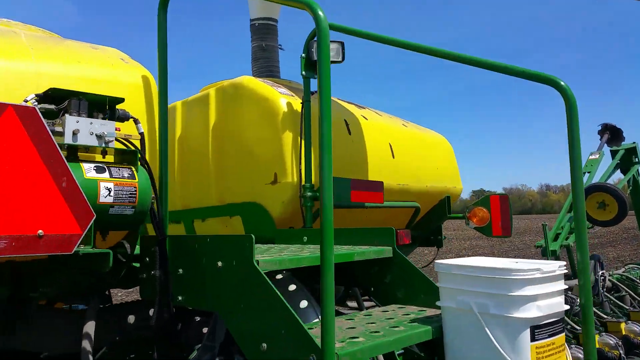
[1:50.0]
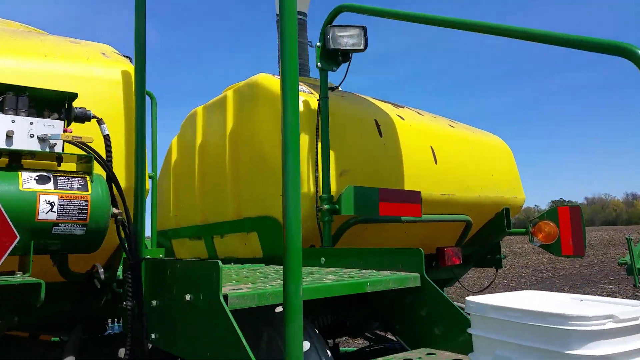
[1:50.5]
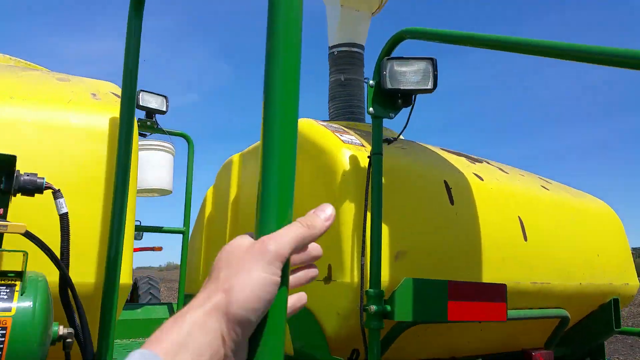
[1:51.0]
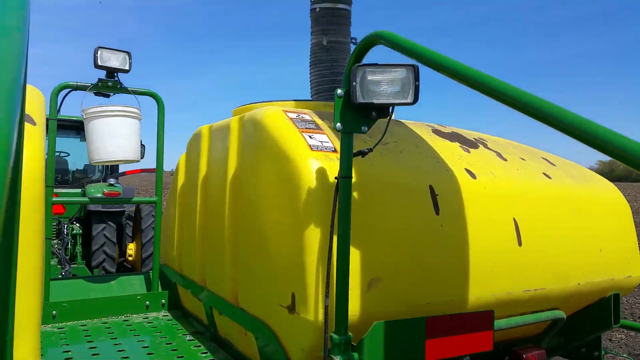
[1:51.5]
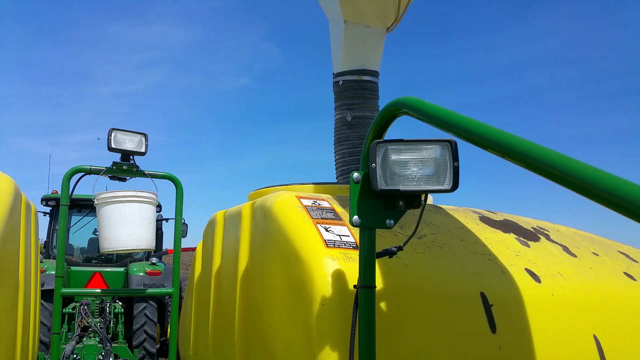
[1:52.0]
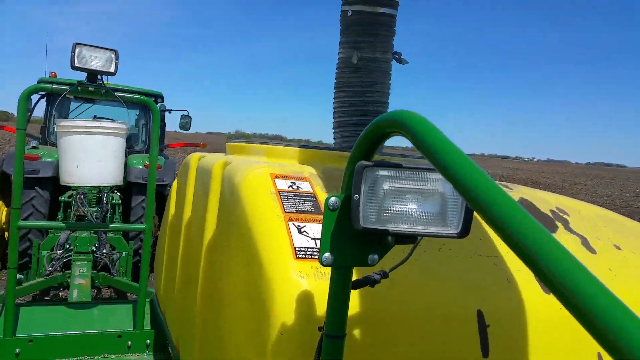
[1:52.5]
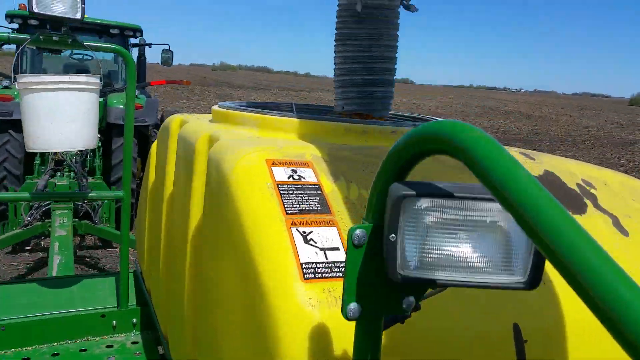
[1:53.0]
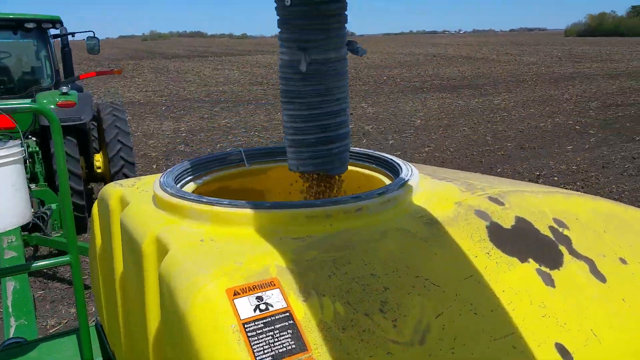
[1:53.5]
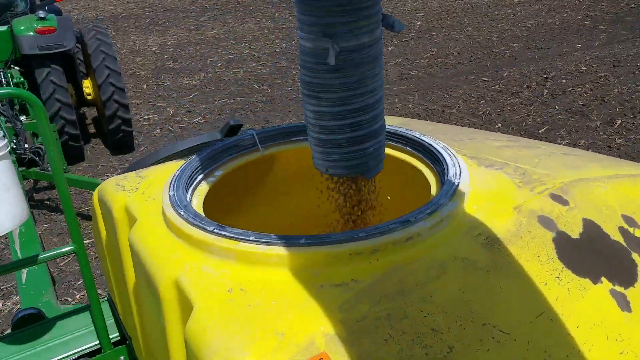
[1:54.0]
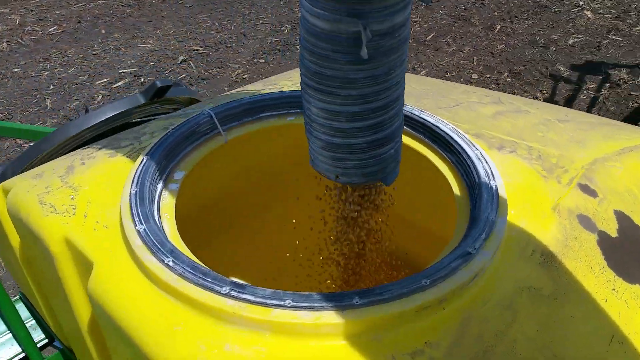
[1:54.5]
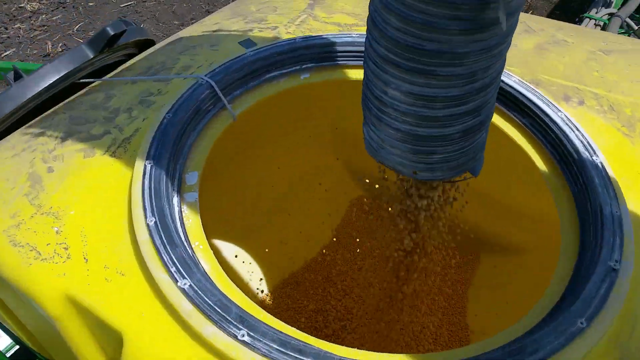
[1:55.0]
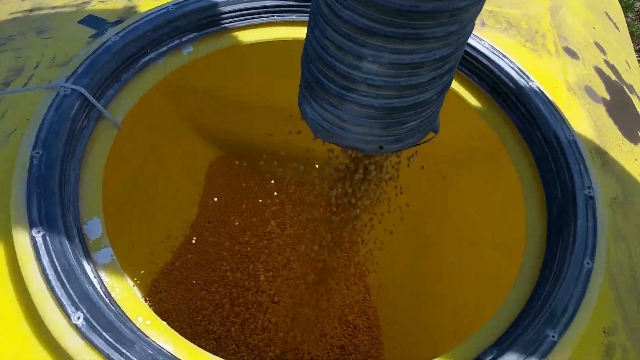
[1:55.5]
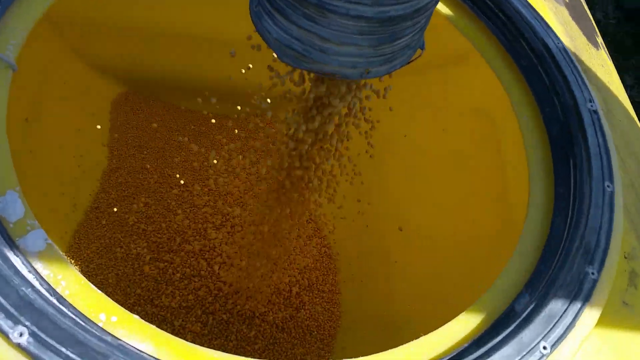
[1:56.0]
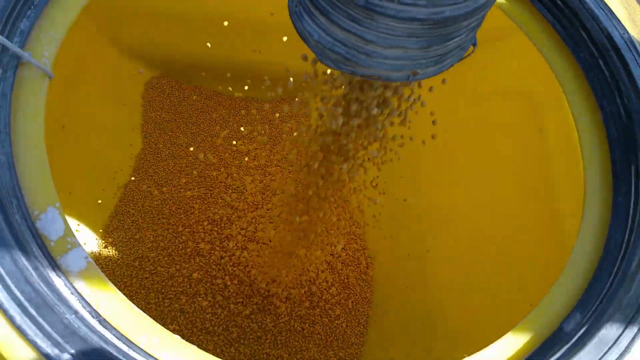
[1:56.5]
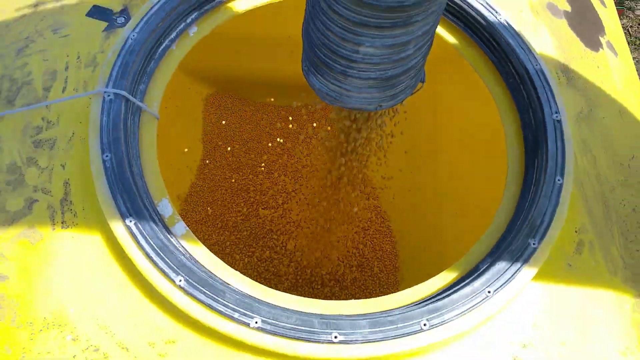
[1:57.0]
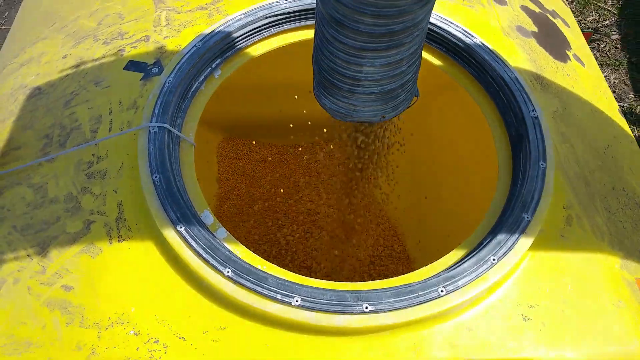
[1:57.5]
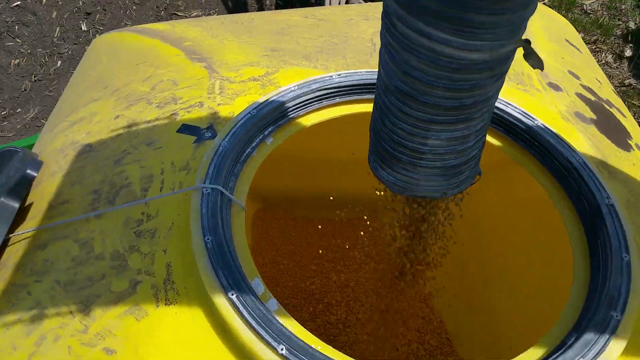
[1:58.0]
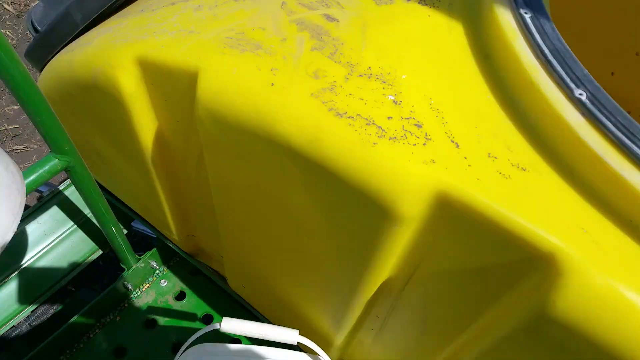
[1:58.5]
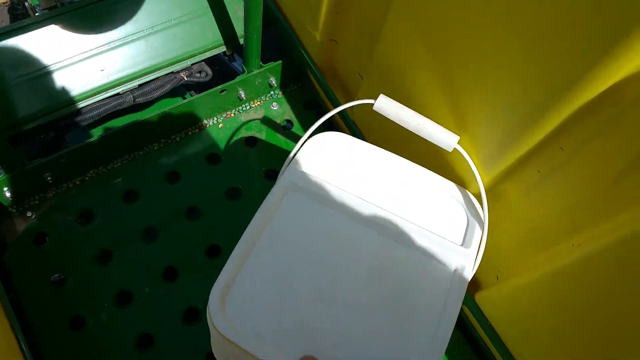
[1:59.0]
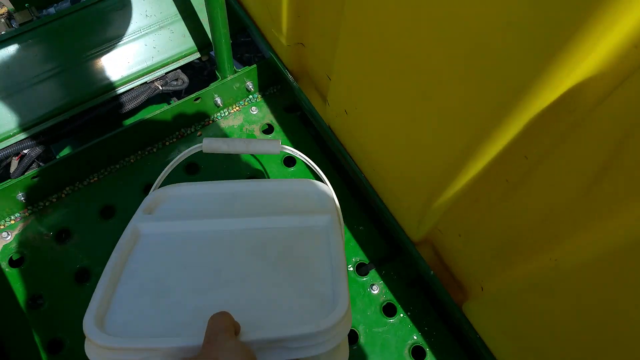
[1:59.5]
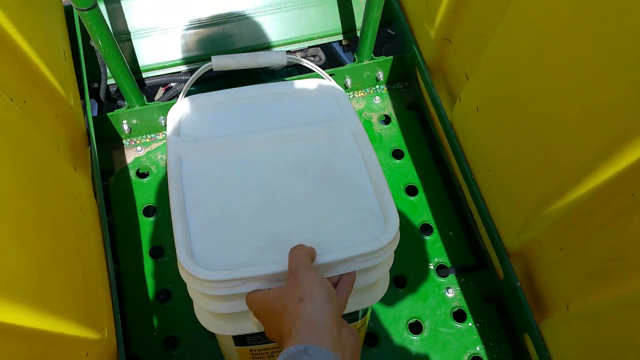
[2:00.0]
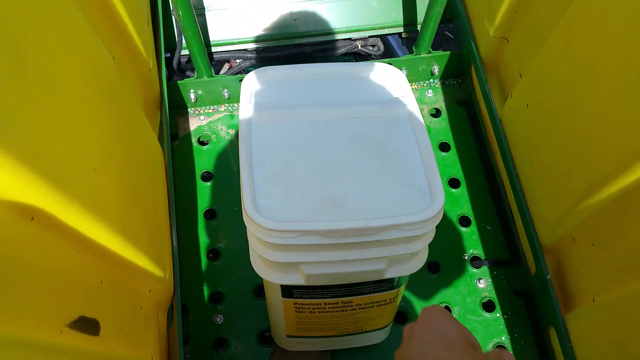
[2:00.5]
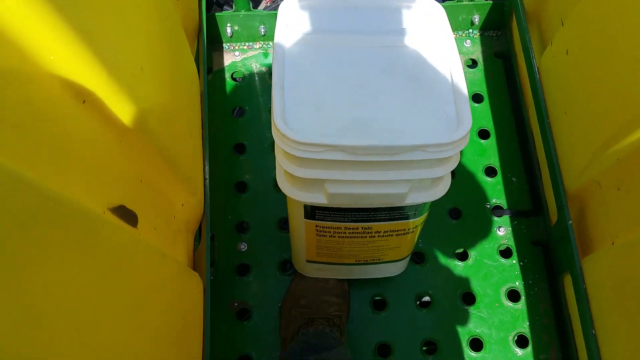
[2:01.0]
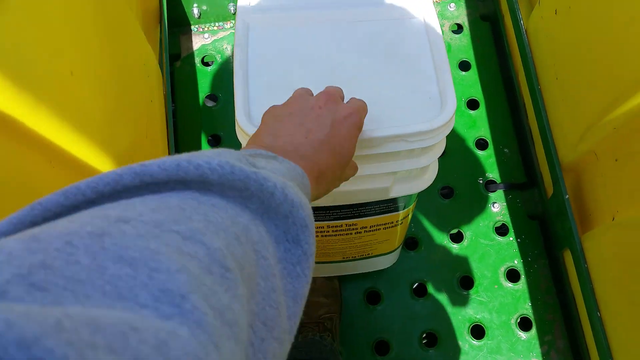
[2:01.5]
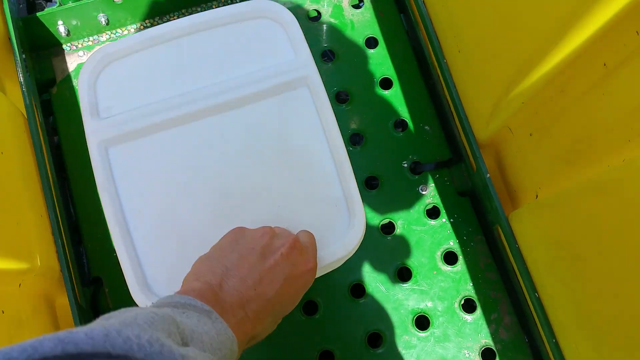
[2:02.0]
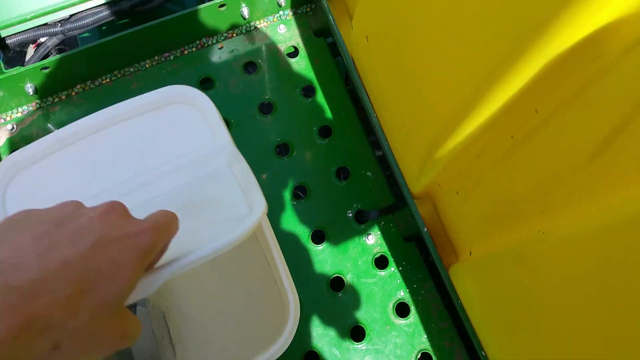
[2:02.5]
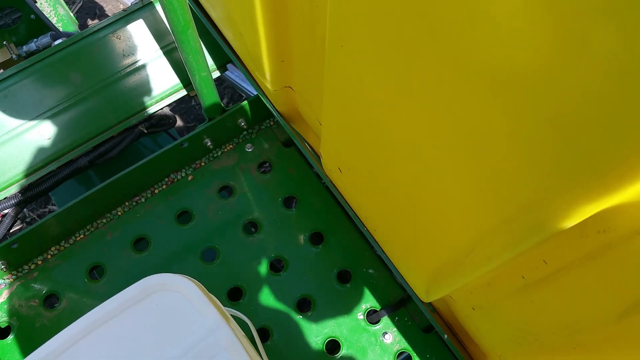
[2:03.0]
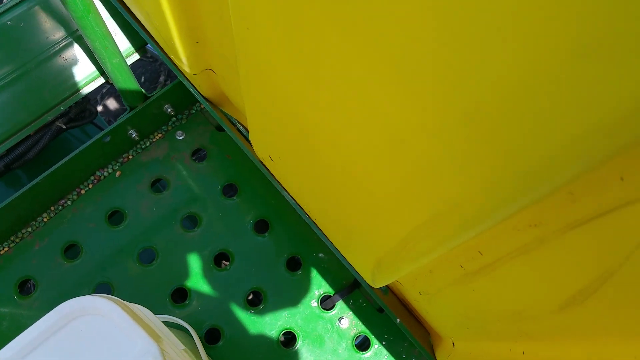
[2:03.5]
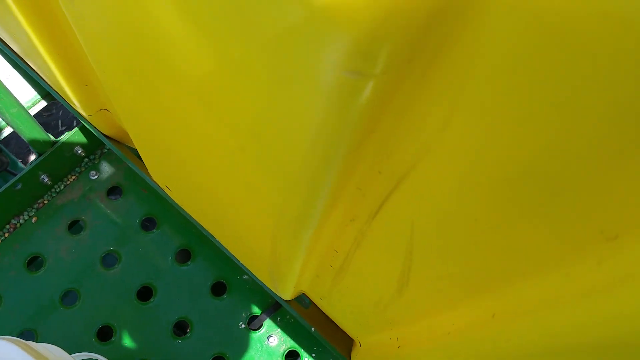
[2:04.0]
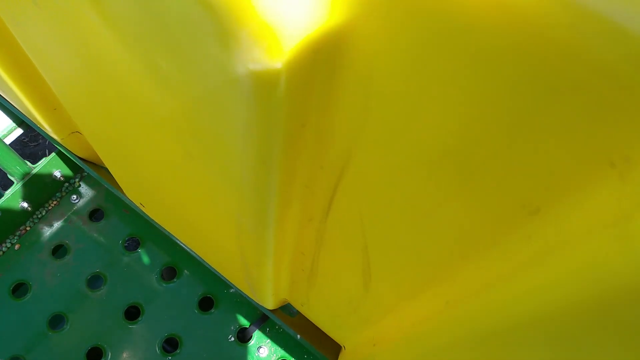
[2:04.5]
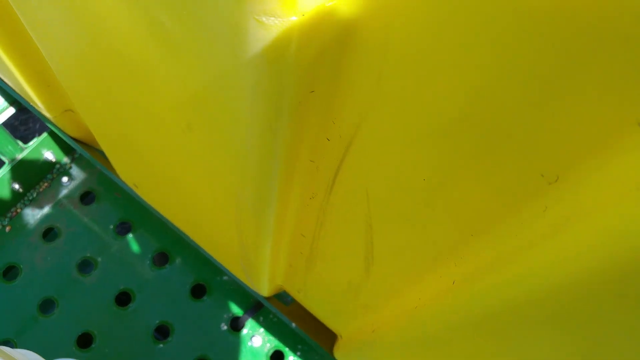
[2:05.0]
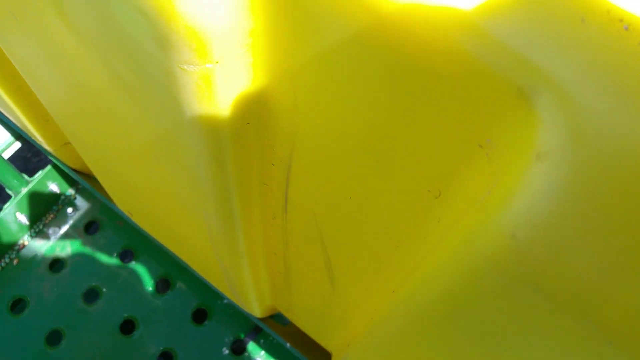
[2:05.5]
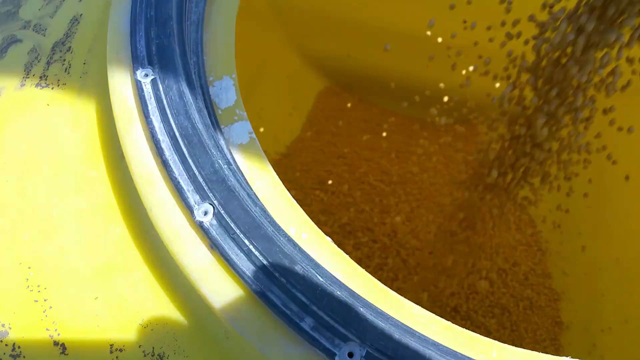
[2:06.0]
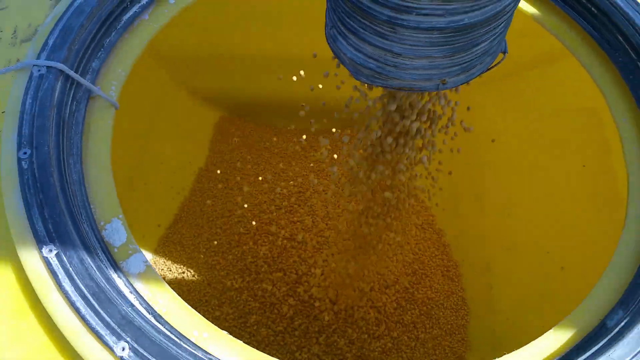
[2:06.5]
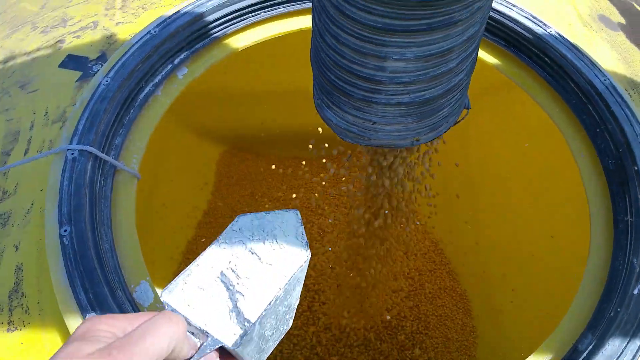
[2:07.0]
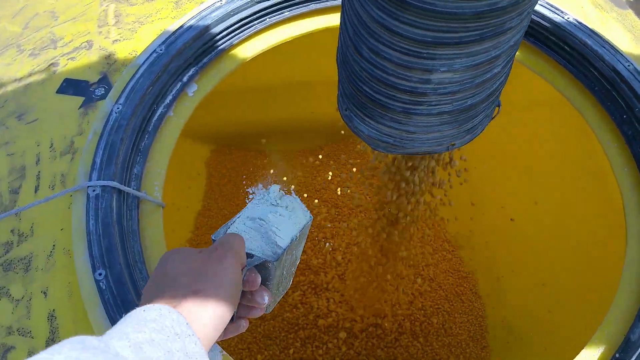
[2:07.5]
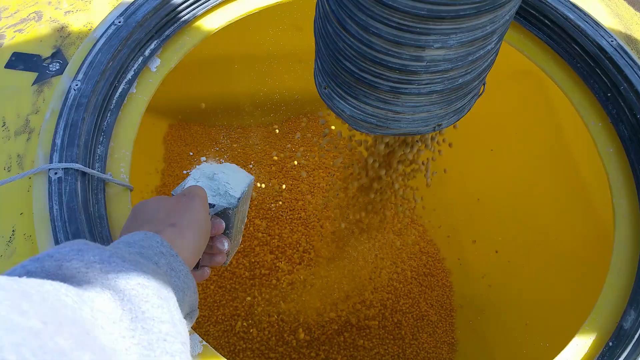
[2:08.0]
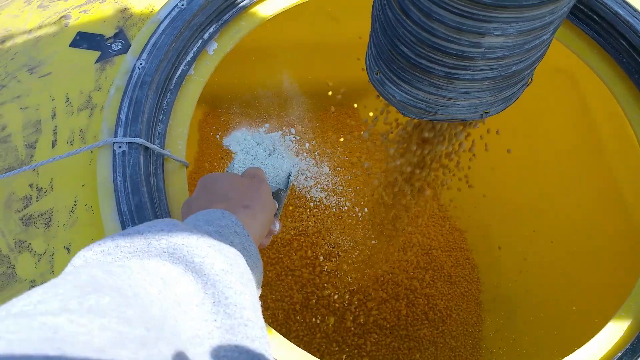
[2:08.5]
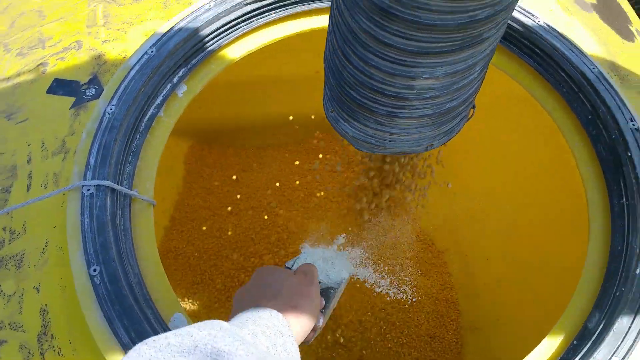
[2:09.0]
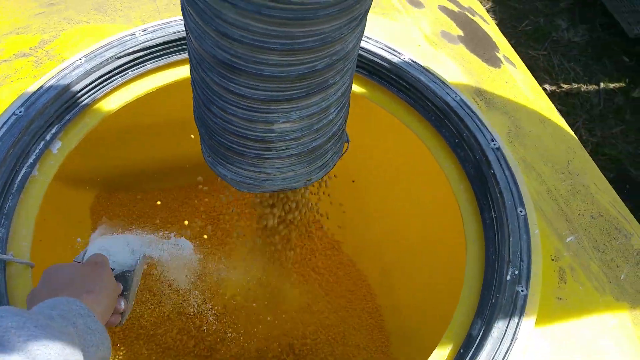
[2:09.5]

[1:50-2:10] The man behind the camera approaches the agricultural machine and climbs the green stairs. The camera points at the tube that feeds into one of the yellow bins on the machine. The feed shoots out a lot of seeds into the bin, and the camera looks inside the bin as it fills up with small orange-yellowish seeds. The man reaches down for a rectangular white bucket, places it next to him, and opens the lid. The camera points back at the opening in the yellow tube, and in his left hand he holds a scoop of white powder, which he pours into the yellow container around the seeds.